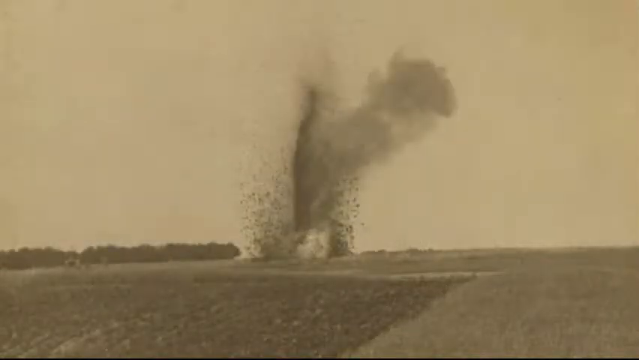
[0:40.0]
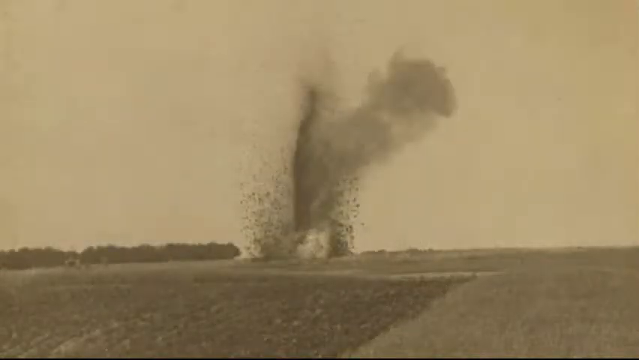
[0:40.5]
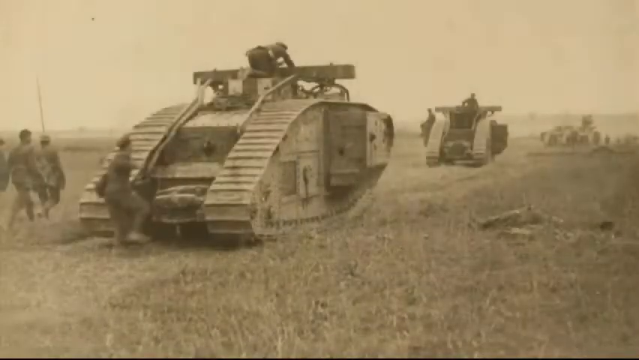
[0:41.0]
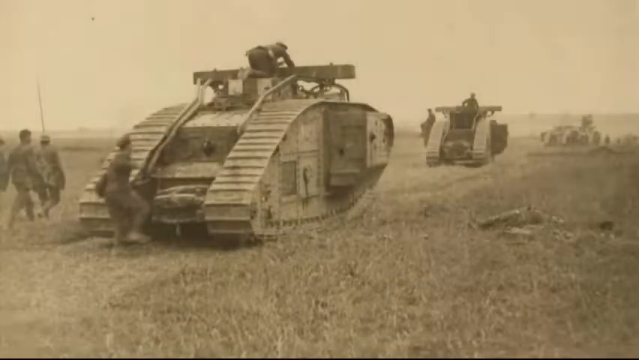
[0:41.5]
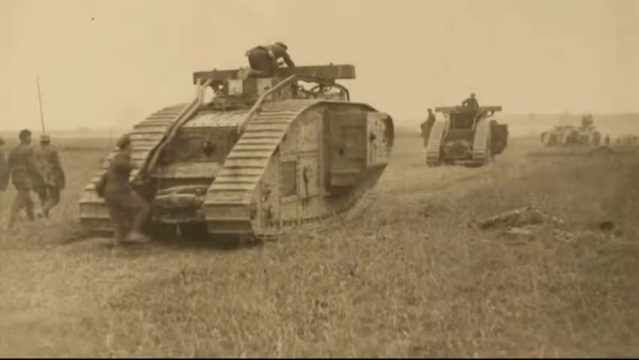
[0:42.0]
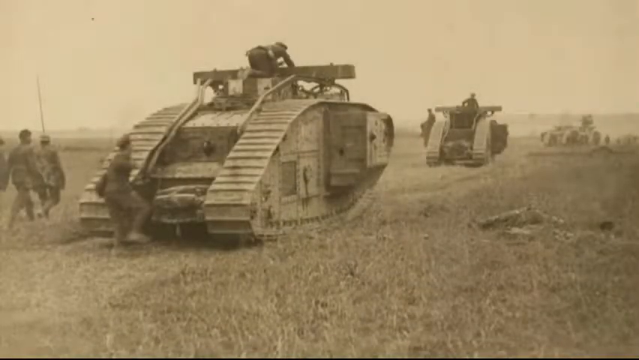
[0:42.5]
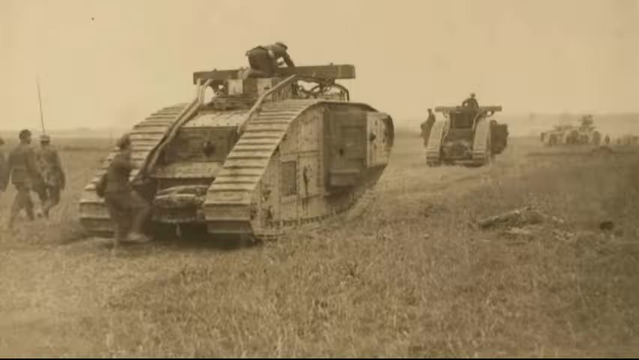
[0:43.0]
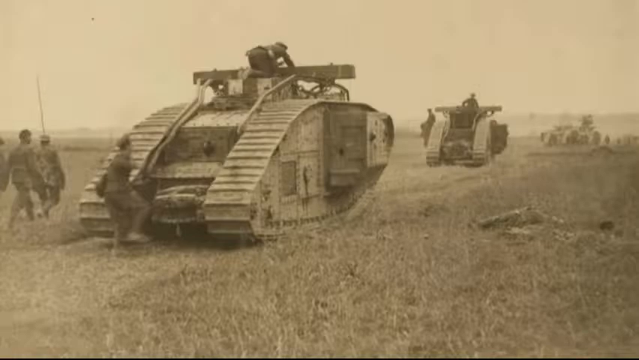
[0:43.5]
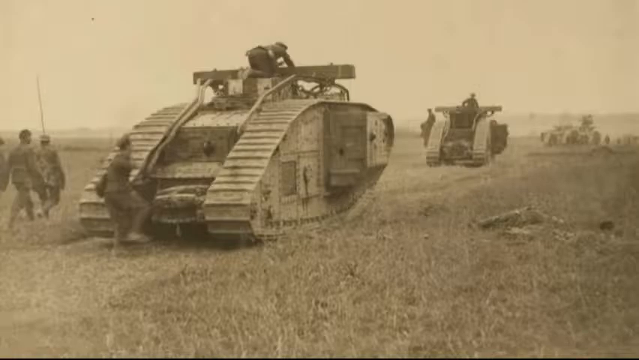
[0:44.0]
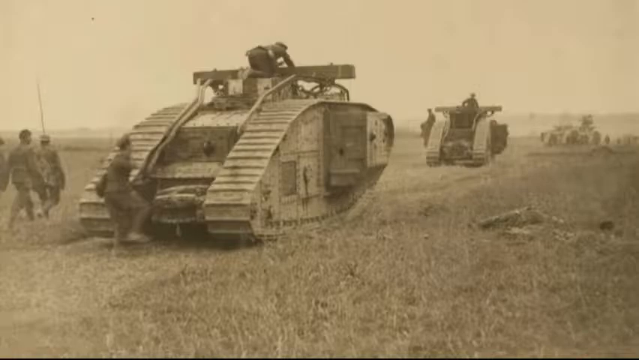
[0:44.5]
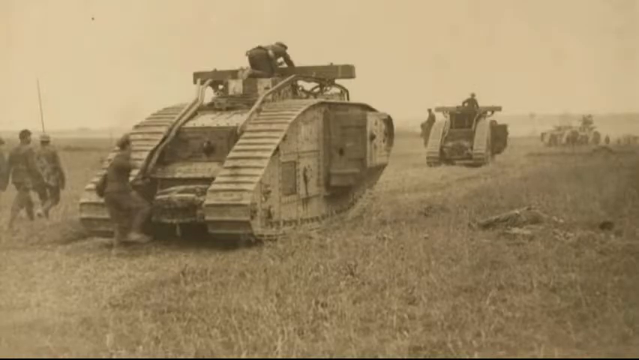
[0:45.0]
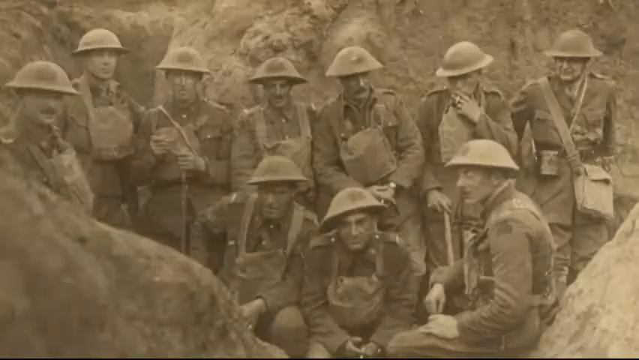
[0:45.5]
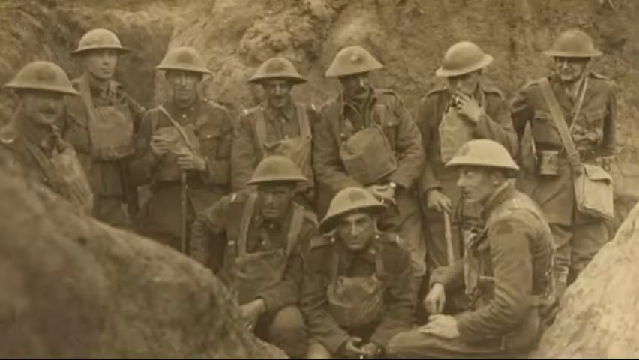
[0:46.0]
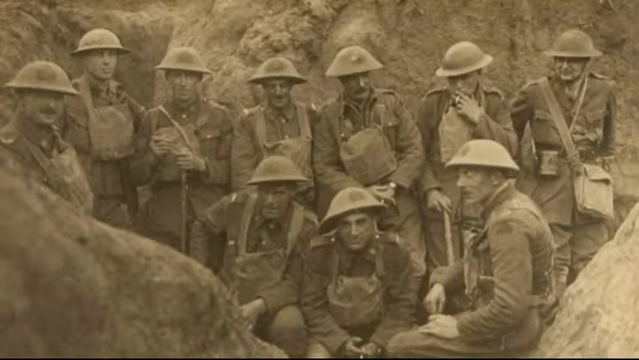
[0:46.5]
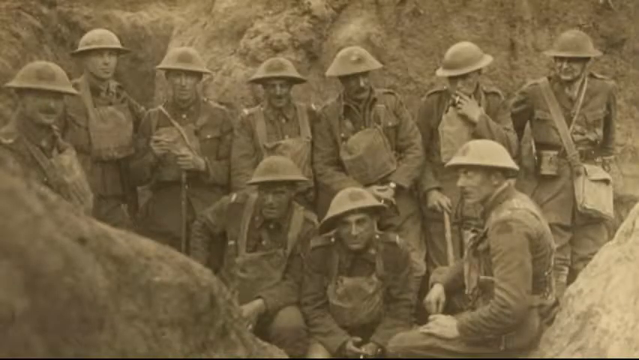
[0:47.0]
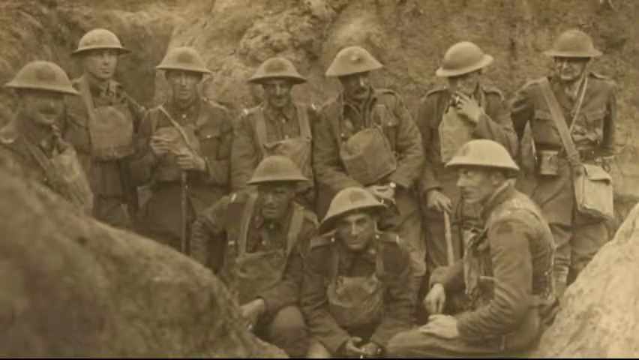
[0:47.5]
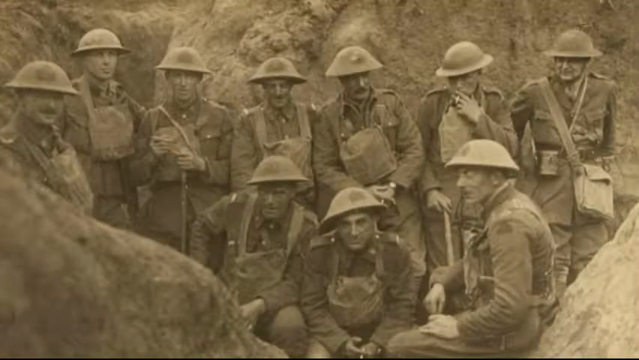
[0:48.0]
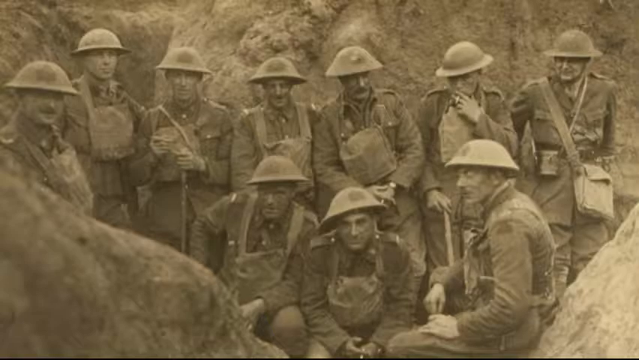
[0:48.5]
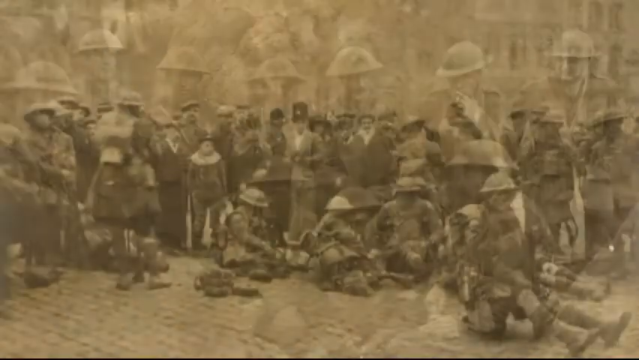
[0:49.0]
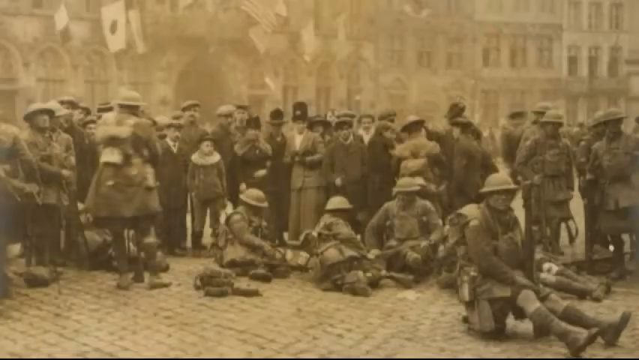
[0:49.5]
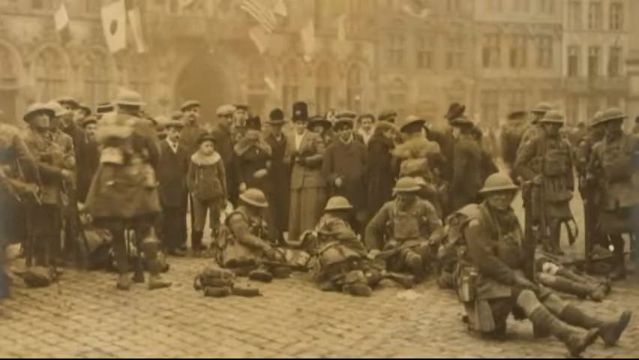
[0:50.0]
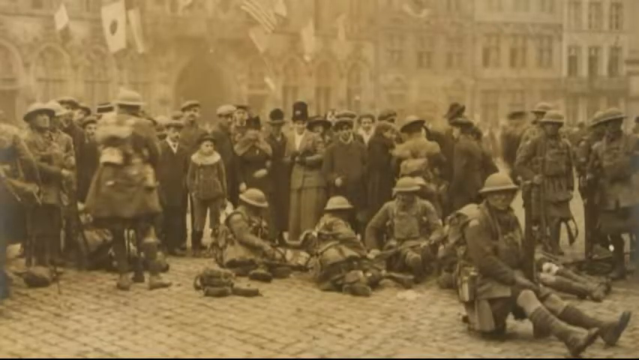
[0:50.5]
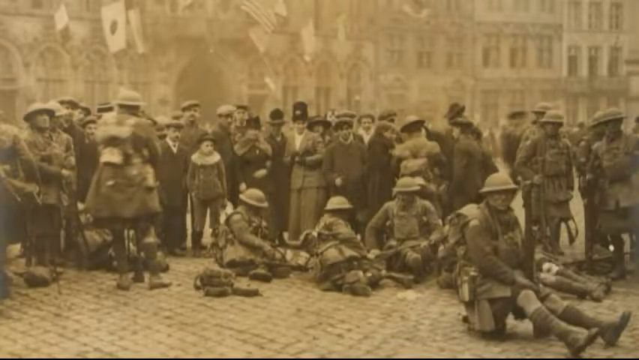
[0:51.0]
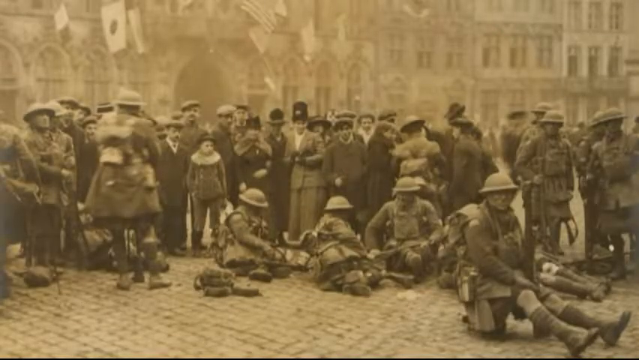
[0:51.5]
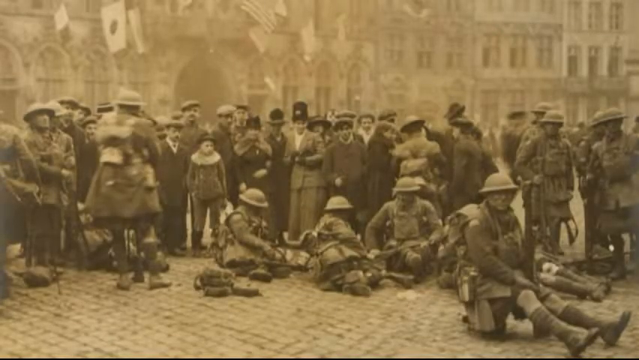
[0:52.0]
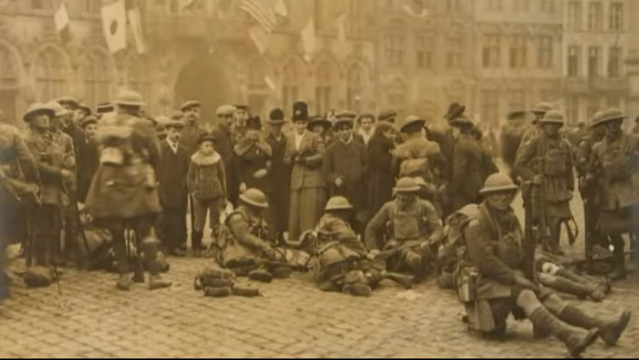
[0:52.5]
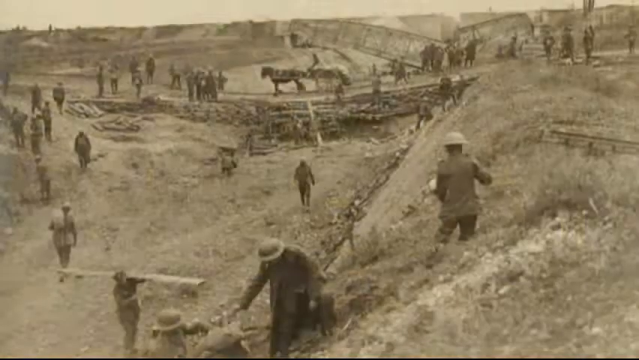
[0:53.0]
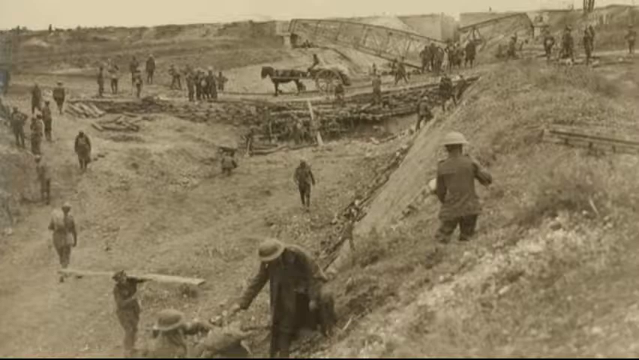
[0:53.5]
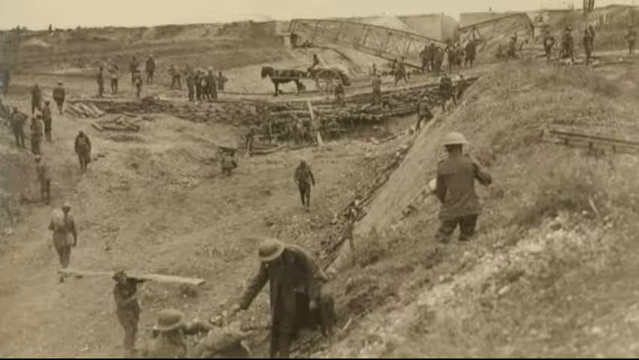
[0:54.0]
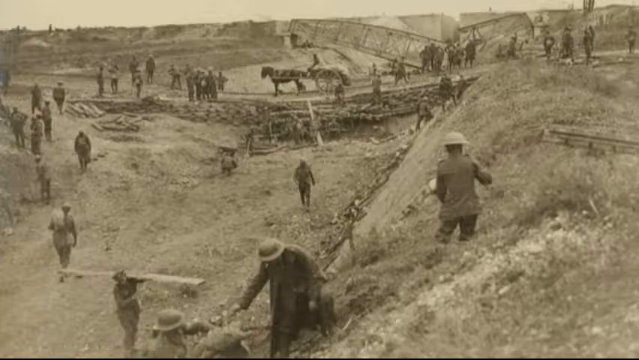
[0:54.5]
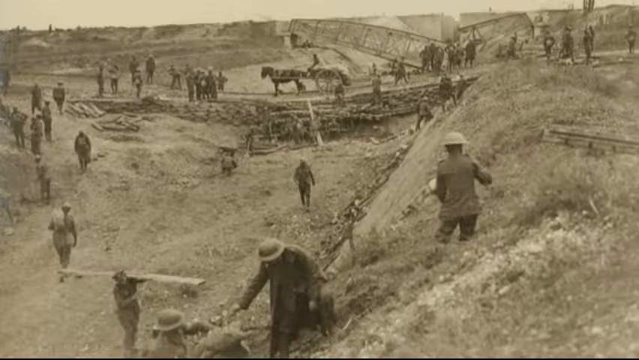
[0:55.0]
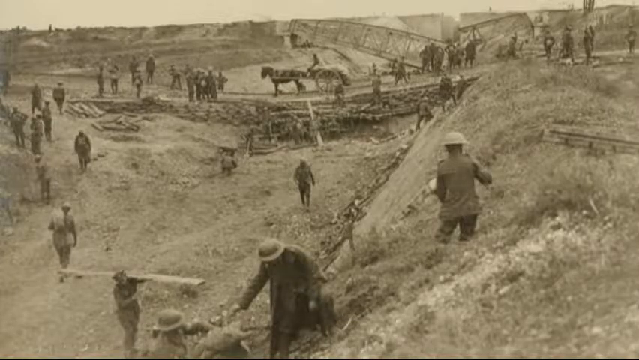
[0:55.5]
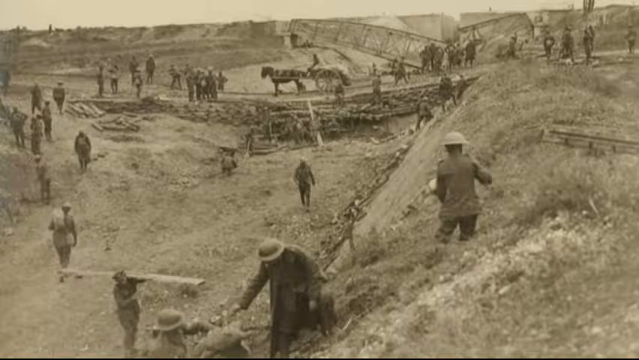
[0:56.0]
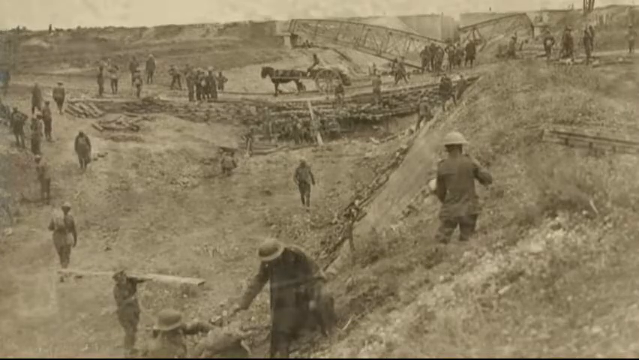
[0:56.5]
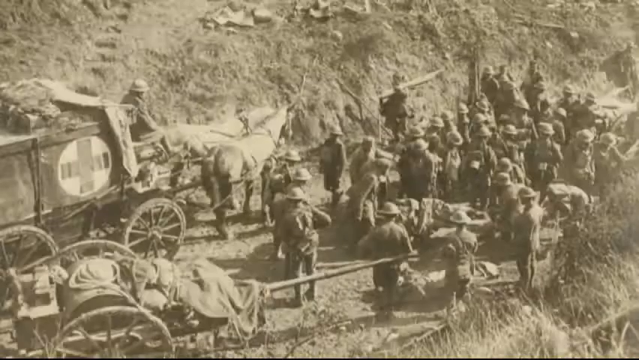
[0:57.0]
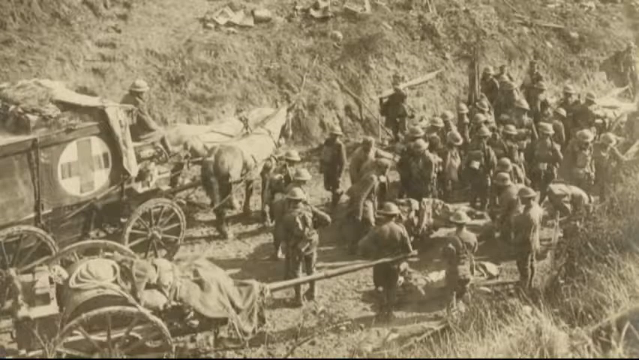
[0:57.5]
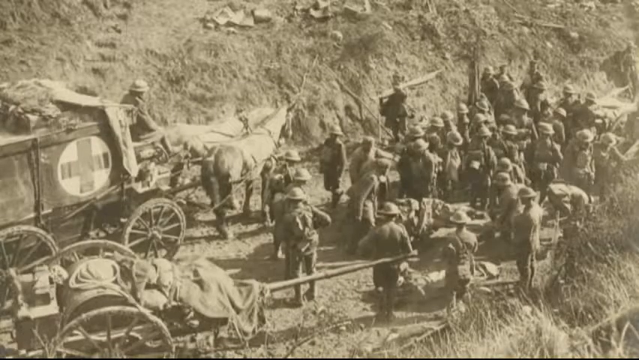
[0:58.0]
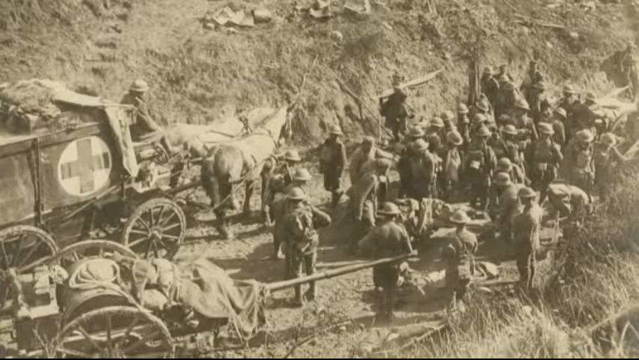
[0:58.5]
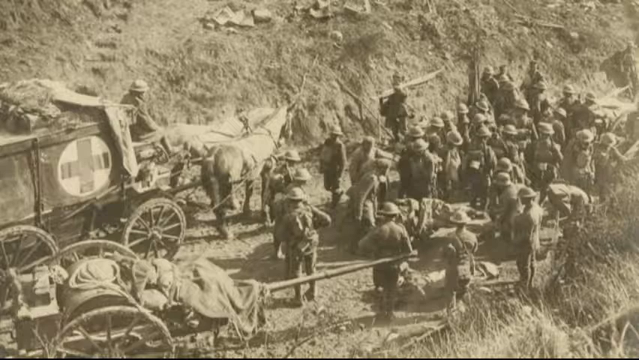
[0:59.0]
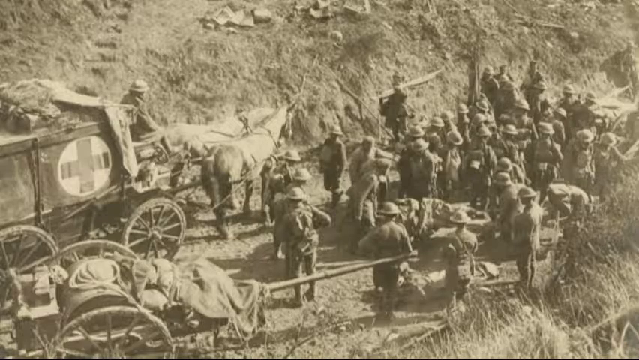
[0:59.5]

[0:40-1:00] A black-and-white picture shows a big field of dirt with a very old tank. A soldier in a military uniform is behind the tank and another soldier is squatted down on top of it. In front of that tank is another tank. Another picture shows a dirt hole in the ground with three men sitting down, all in military uniforms and helmets, and behind them six men standing up in military uniforms and big round helmets, all looking at the camera. Next, a picture shows a very large, long, tall building with many windows in the background, a lot of people from long ago dressed in World War I clothing standing in front of it, and in front of that group, soldiers in military uniforms and helmets sitting on the ground.